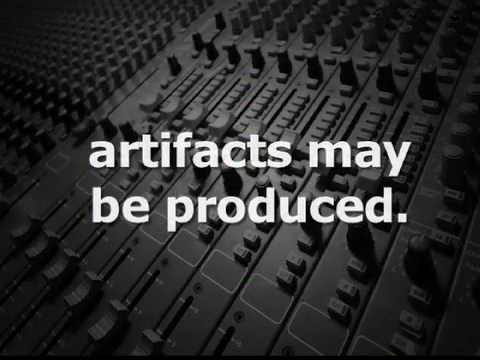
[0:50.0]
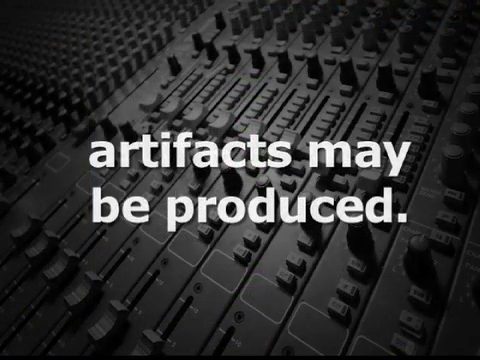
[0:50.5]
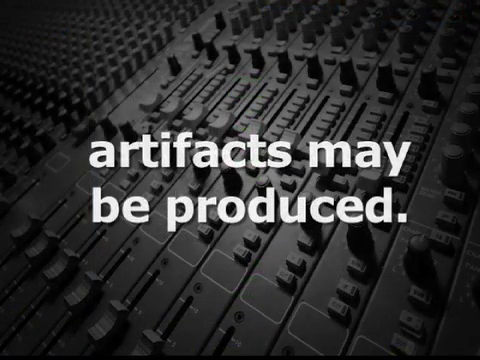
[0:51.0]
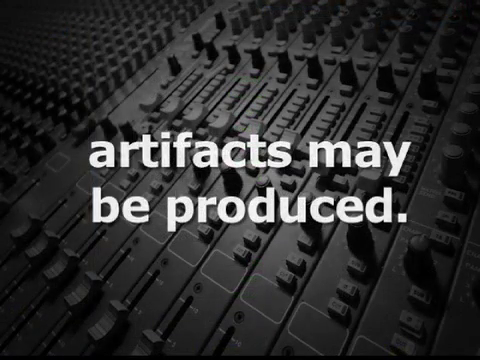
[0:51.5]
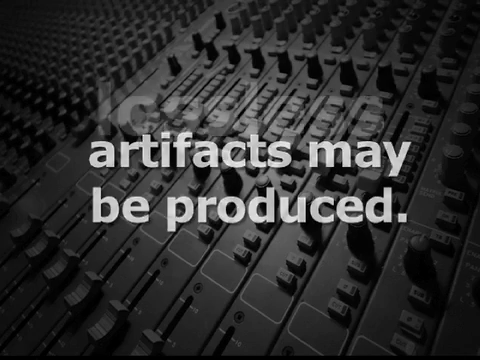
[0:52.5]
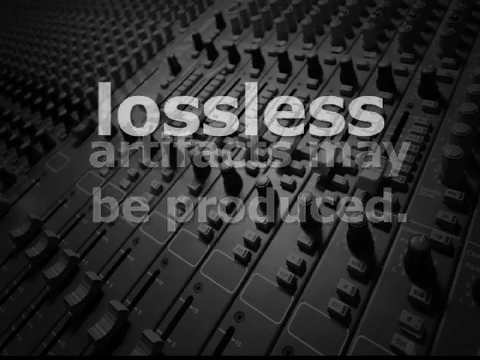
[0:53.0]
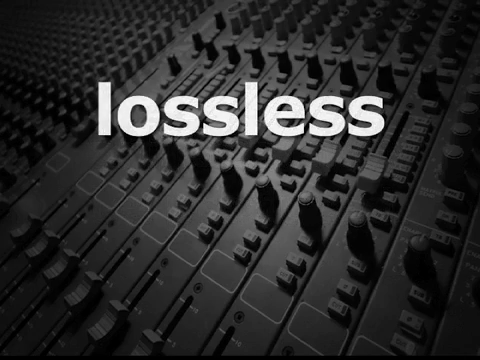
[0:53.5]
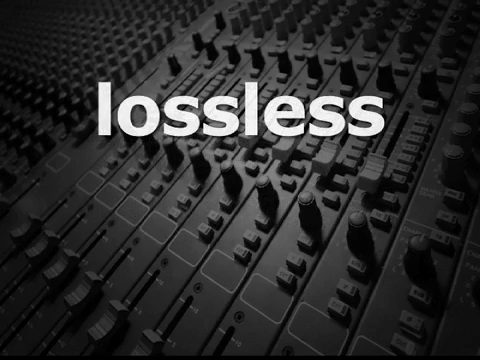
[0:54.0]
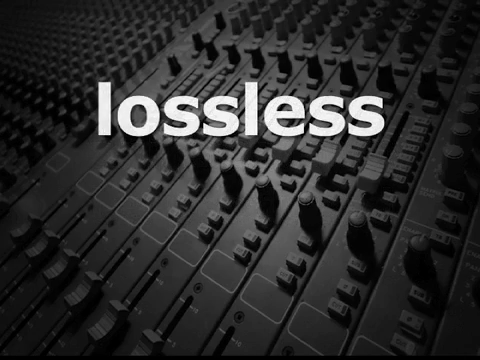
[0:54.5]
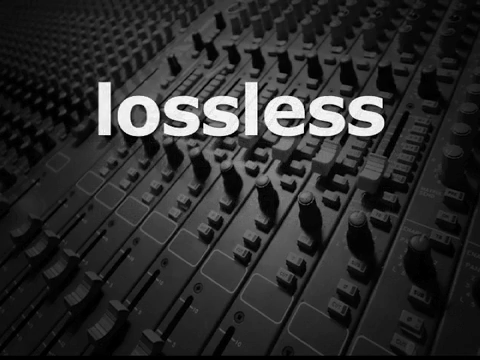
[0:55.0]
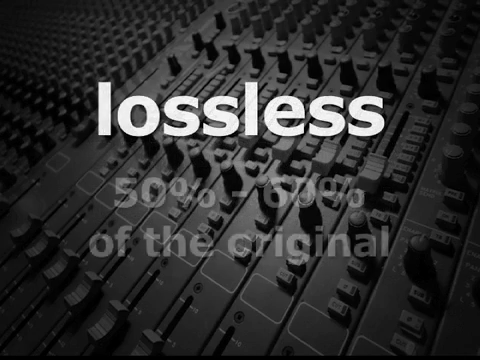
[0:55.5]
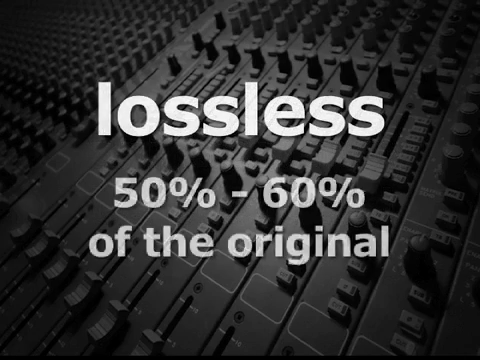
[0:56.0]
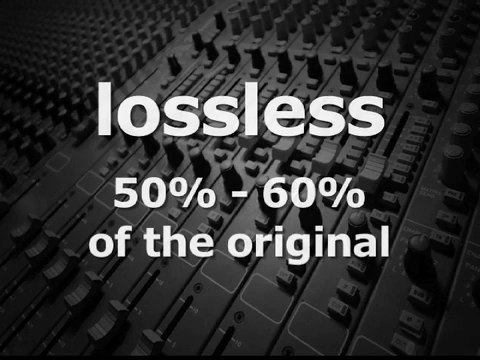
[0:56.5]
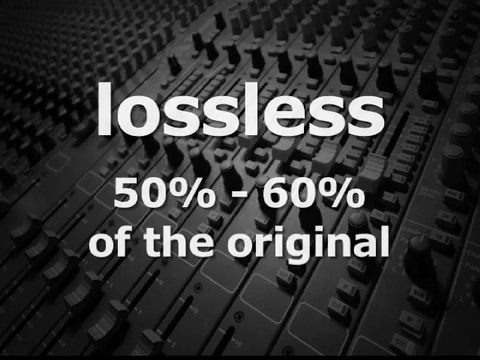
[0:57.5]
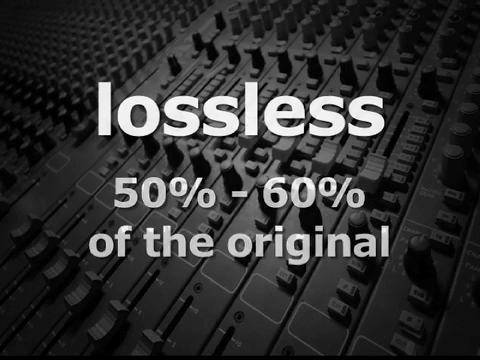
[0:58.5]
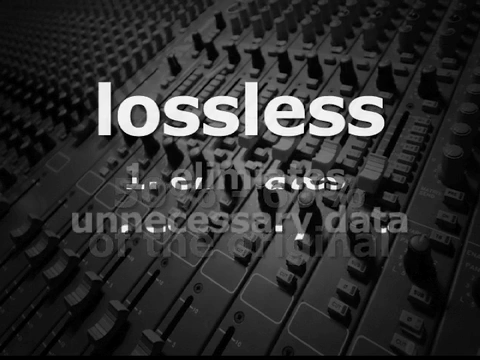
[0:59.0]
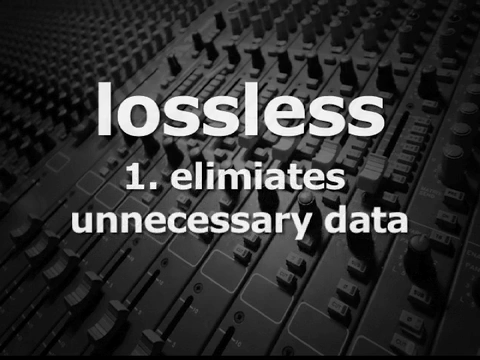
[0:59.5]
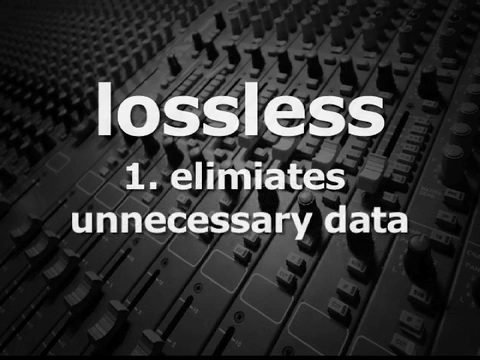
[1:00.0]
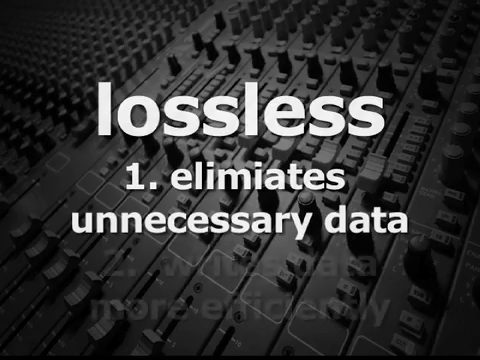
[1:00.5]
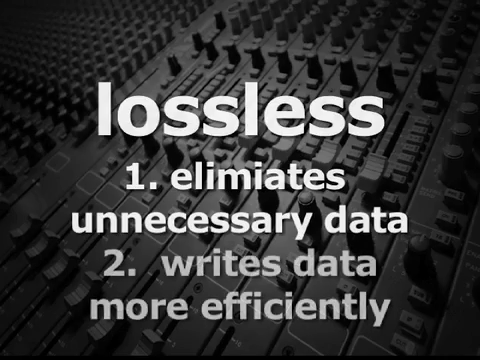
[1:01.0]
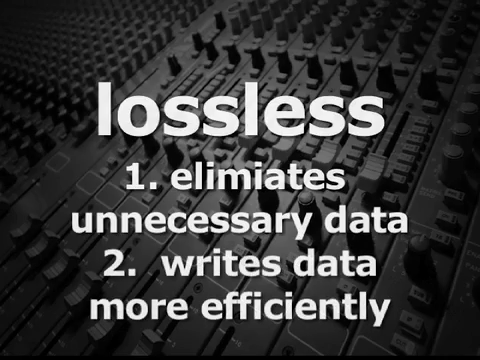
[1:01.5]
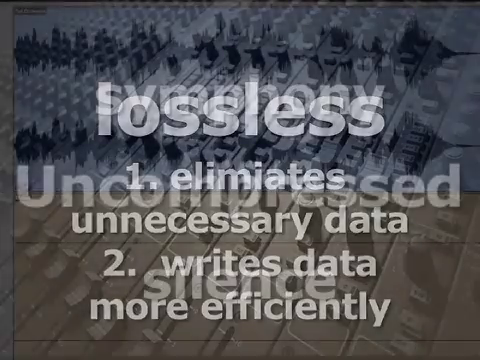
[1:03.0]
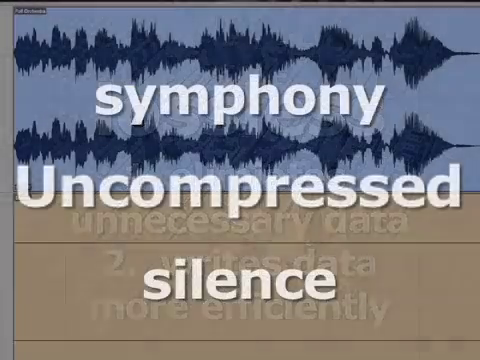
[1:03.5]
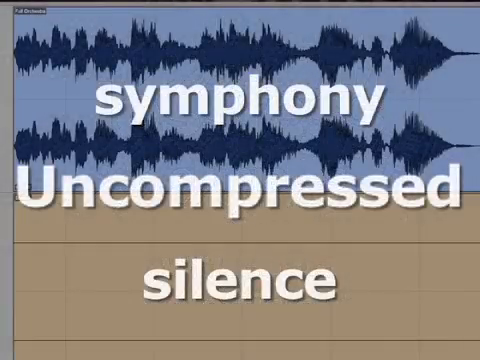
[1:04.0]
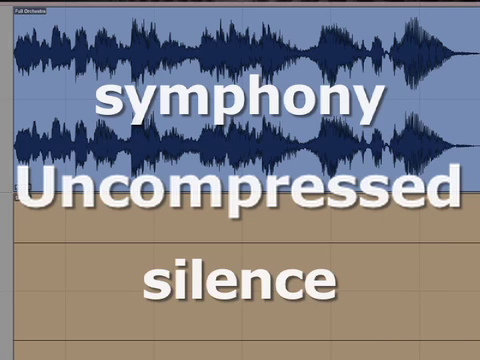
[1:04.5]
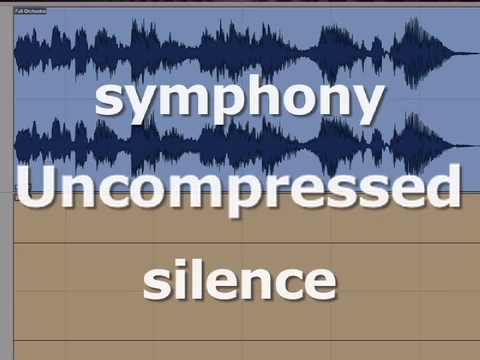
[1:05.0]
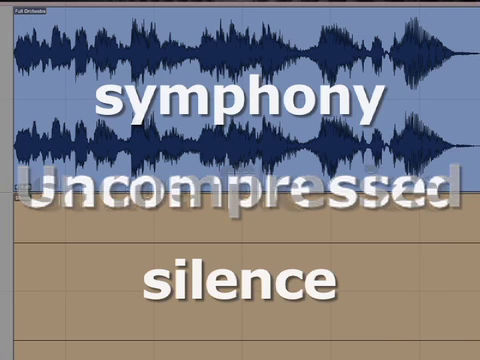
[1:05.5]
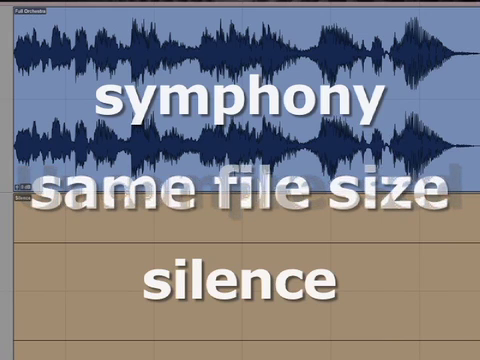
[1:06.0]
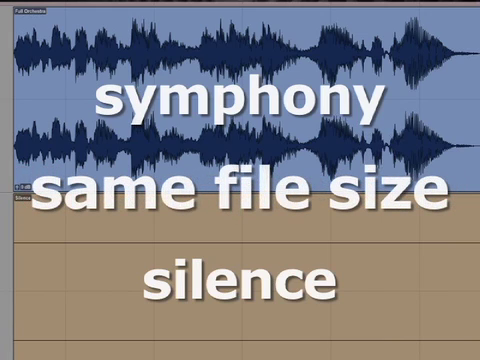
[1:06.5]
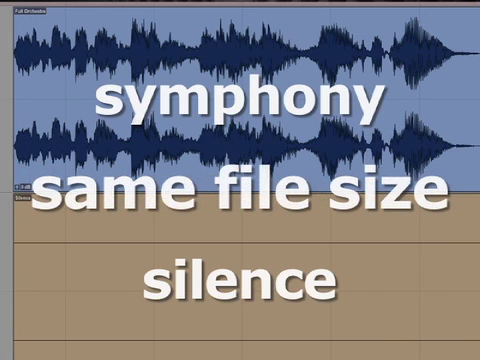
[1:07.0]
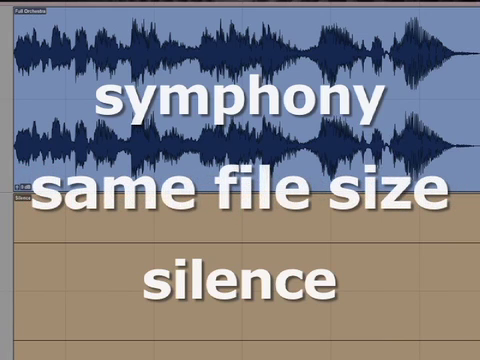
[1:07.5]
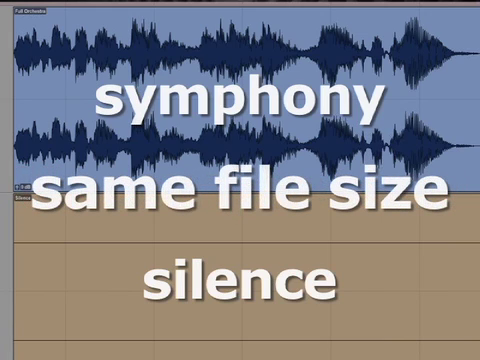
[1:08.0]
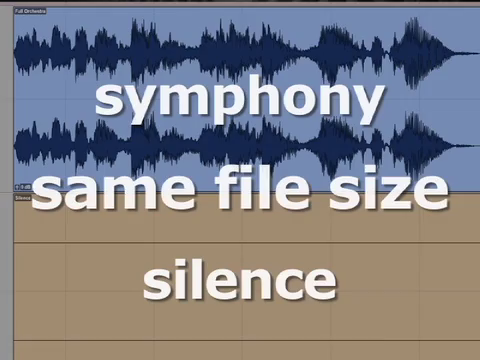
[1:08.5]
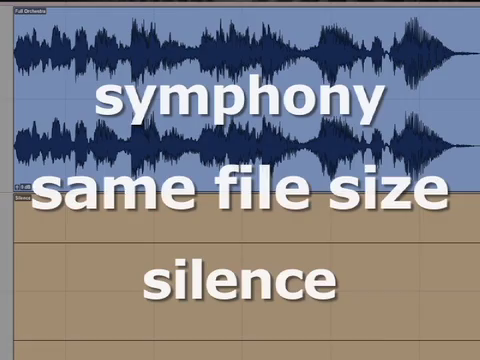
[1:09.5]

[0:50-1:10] Two lines of wording are in the center of the video, in white, all-lowercase font: "artifacts may" on the first line and "be produced" on the second, with an equalizer like one seen in a professional studio behind it. The wording dissipates and other white, all-lowercase wording pops up: "lossless". More wording pops up underneath it: "50%-60% of the original". That bottom wording disappears and more wording comes in: "number 1 elimiates unnecessary data". Underneath step 1, step 2 appears: "writes data more efficiently". A different screen is then shown, with what looks like a sound wave in the top part and a straight line in the bottom part; the wording in the center says "symphony, uncompressed silence".